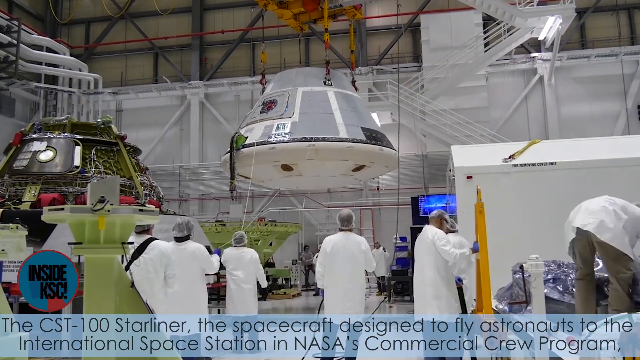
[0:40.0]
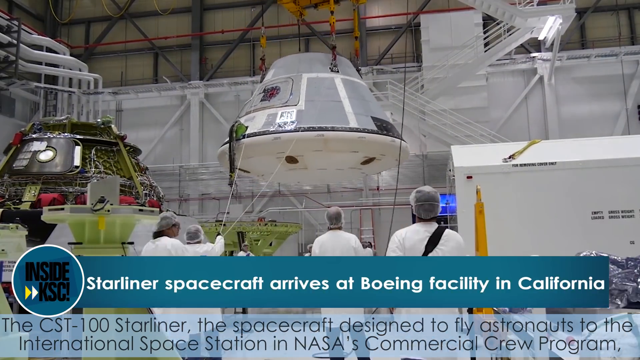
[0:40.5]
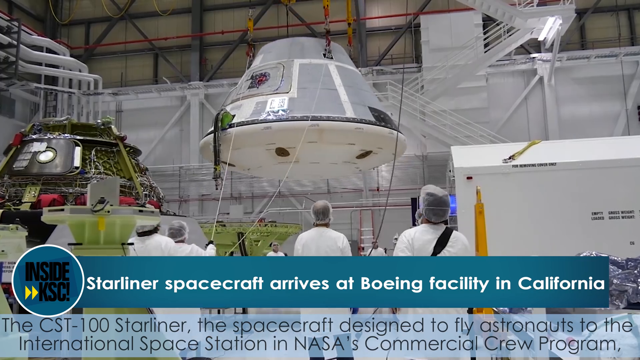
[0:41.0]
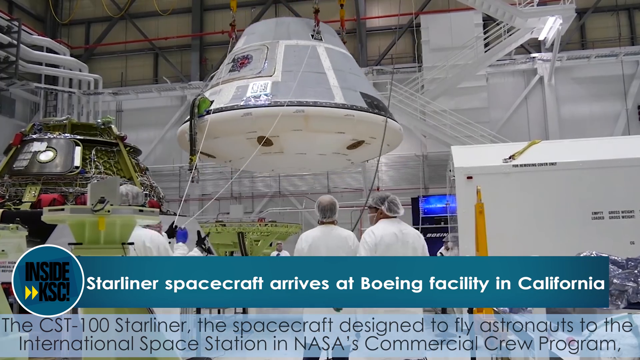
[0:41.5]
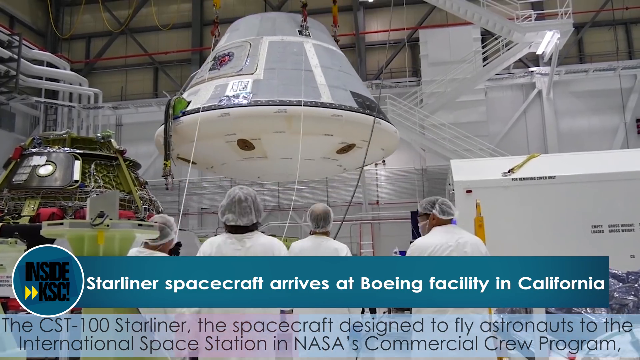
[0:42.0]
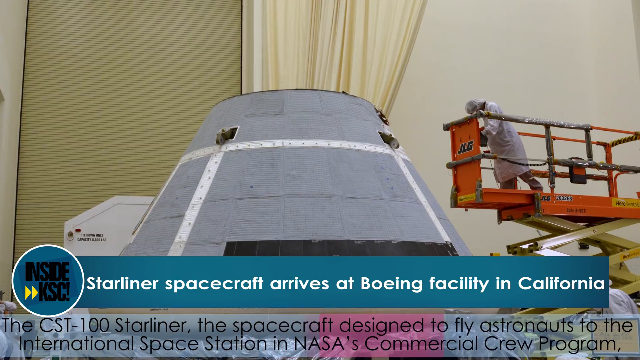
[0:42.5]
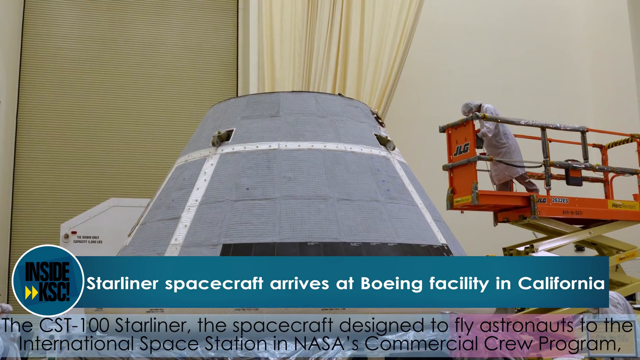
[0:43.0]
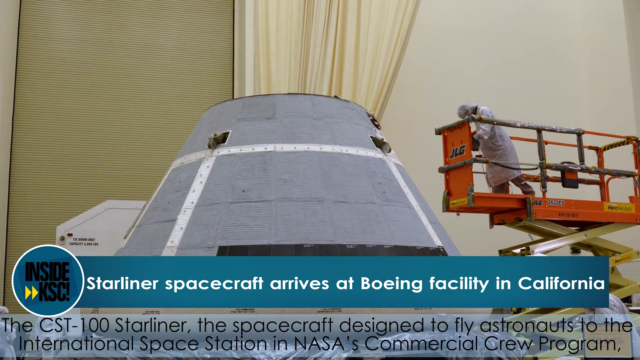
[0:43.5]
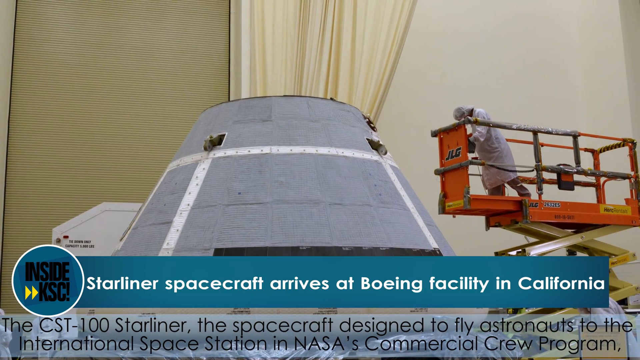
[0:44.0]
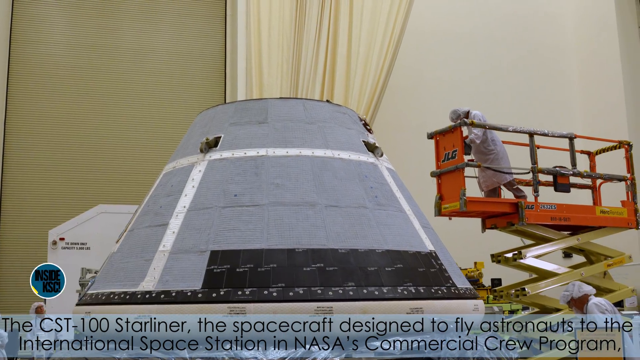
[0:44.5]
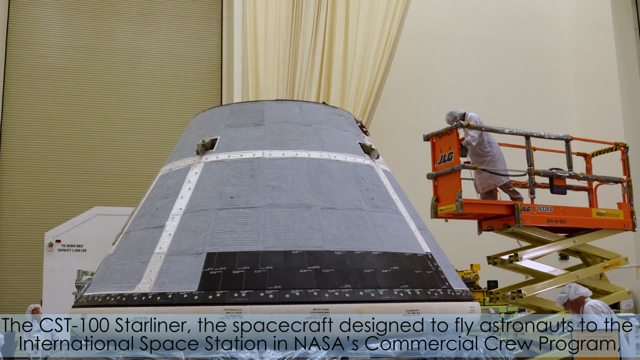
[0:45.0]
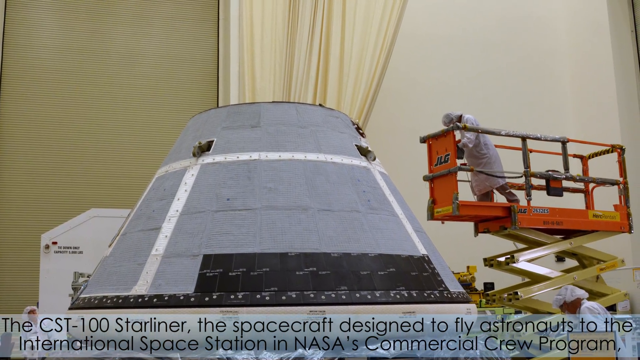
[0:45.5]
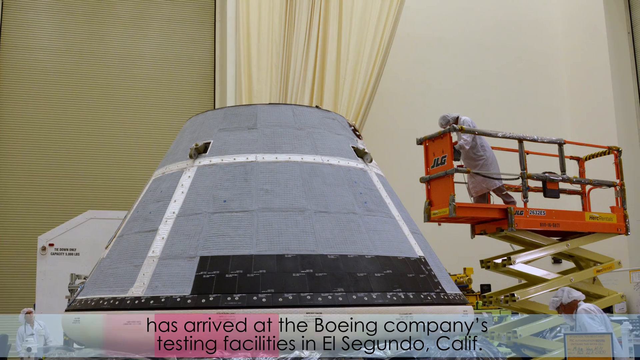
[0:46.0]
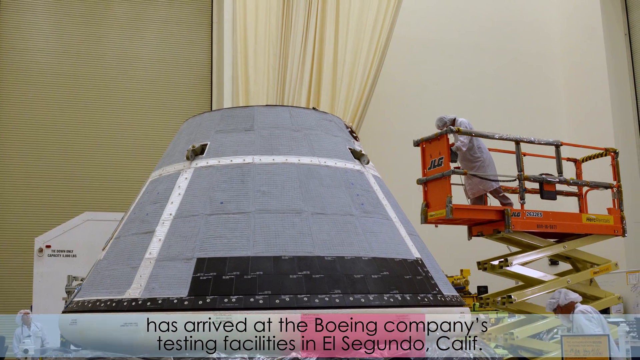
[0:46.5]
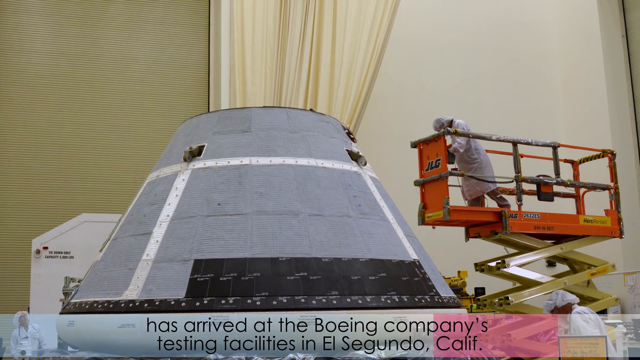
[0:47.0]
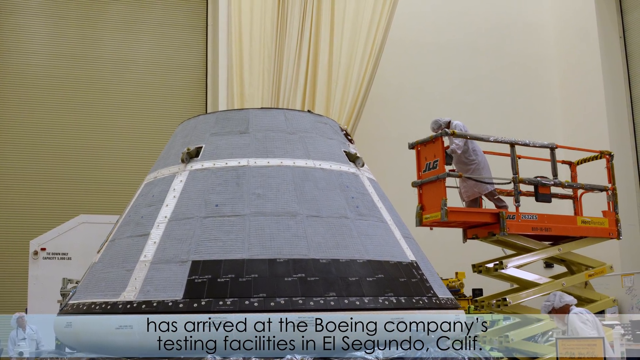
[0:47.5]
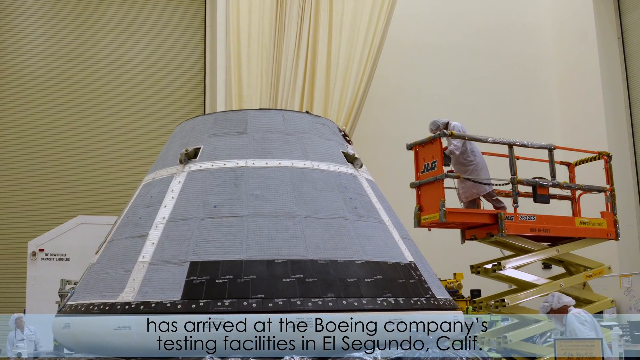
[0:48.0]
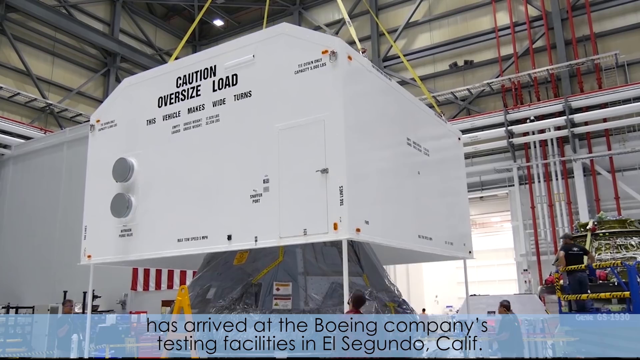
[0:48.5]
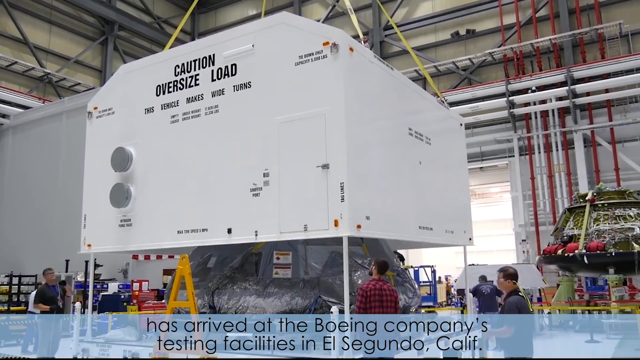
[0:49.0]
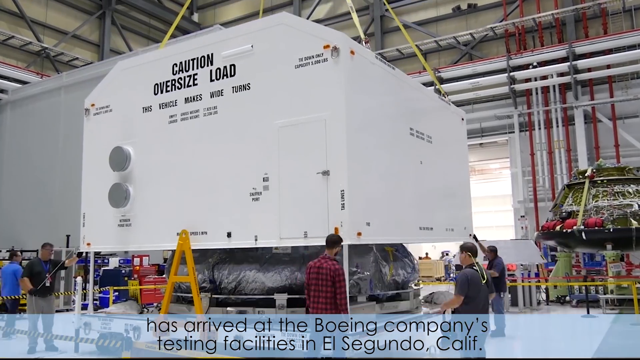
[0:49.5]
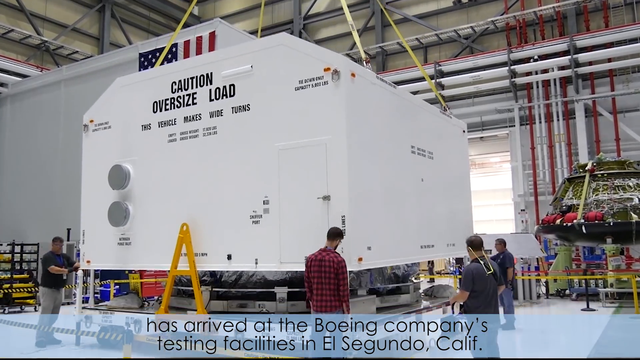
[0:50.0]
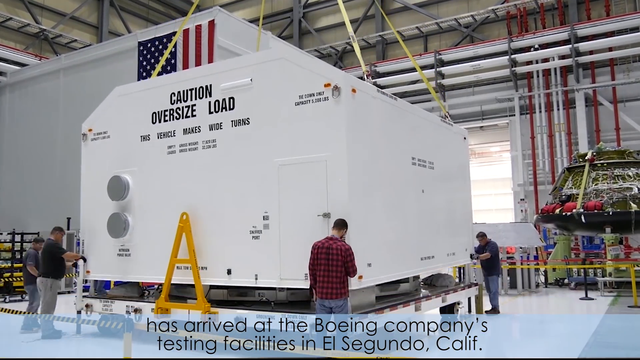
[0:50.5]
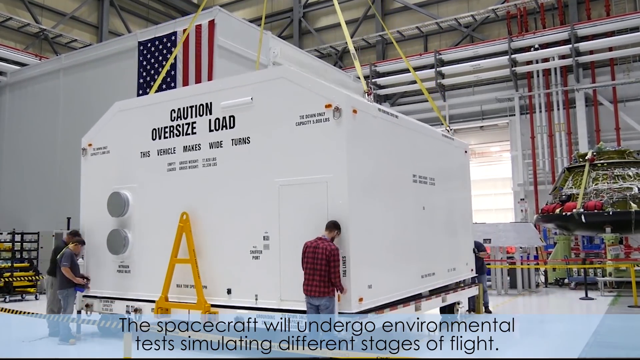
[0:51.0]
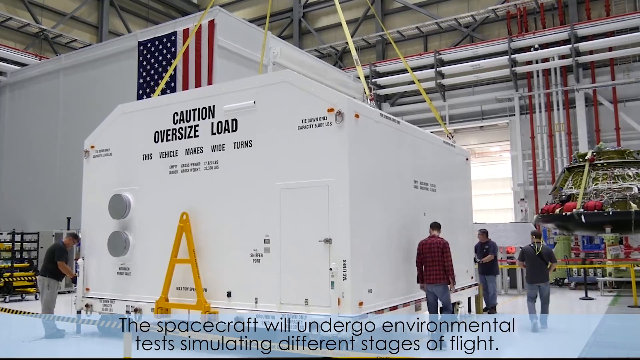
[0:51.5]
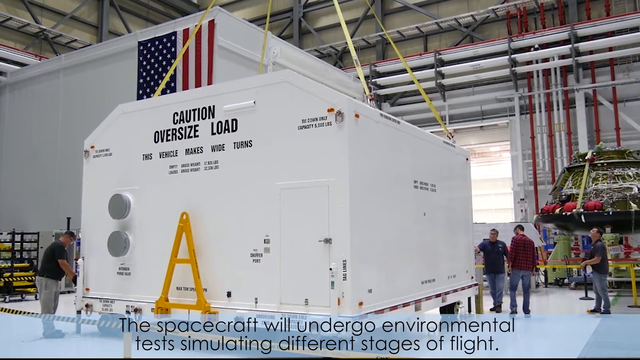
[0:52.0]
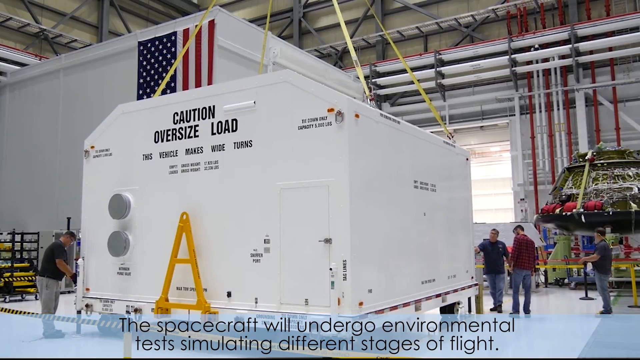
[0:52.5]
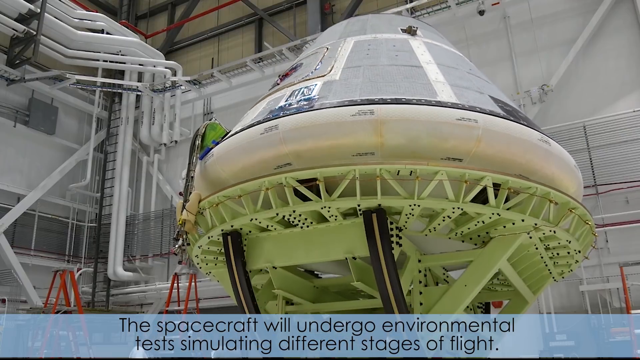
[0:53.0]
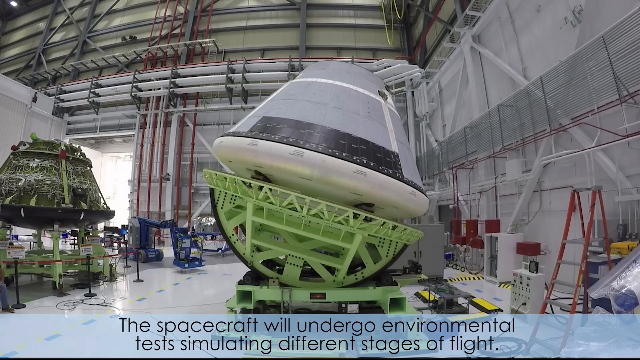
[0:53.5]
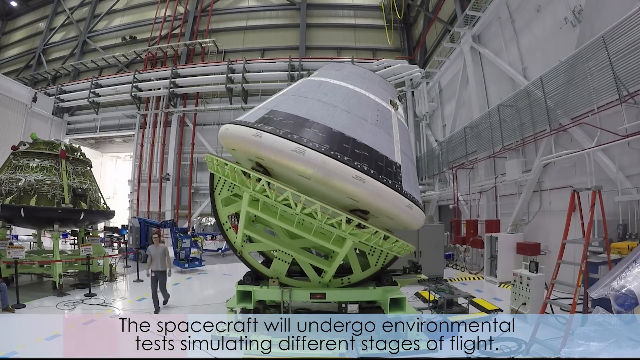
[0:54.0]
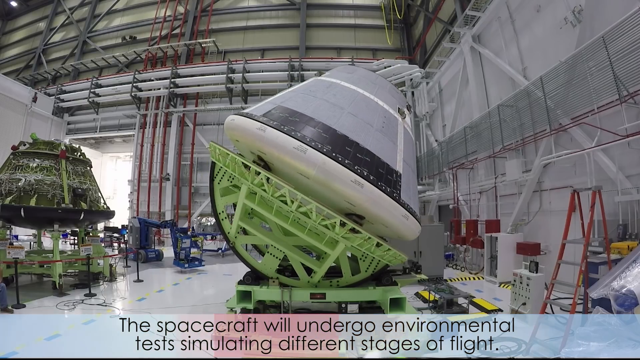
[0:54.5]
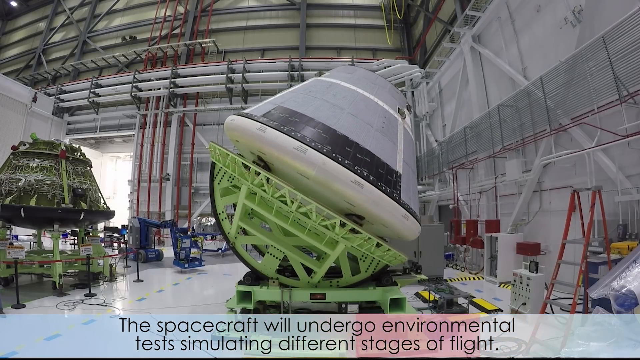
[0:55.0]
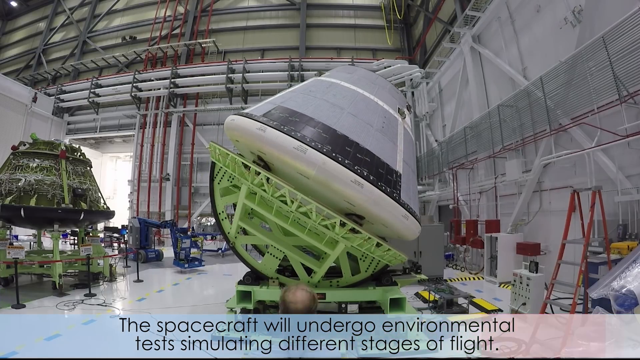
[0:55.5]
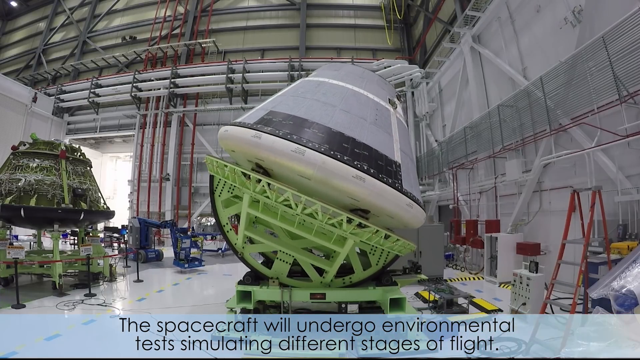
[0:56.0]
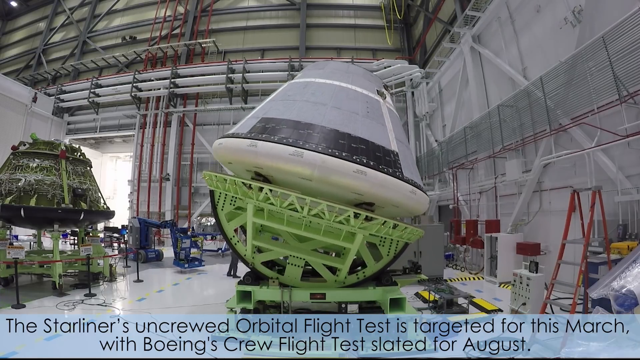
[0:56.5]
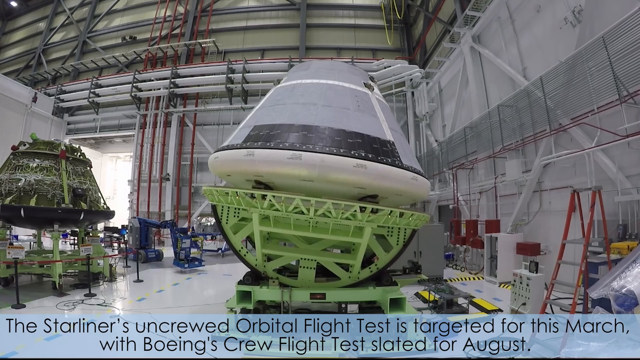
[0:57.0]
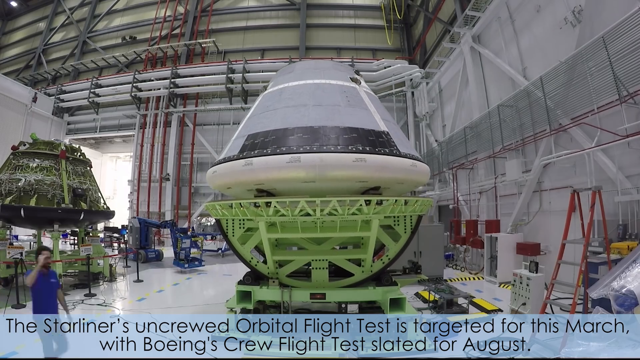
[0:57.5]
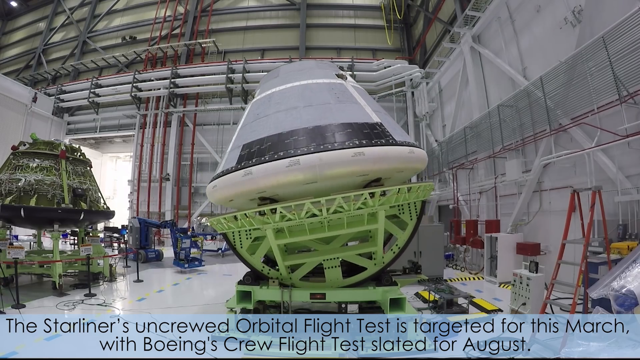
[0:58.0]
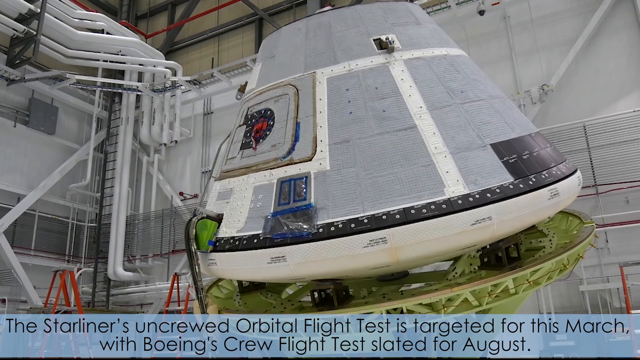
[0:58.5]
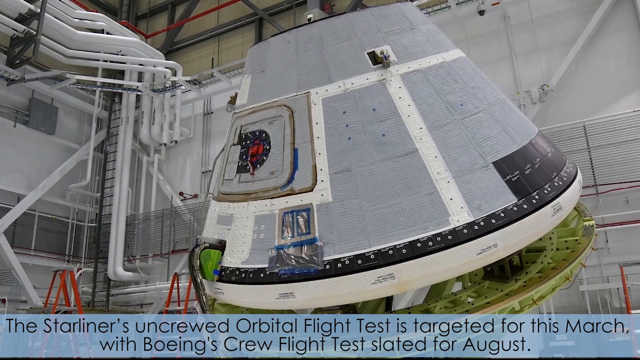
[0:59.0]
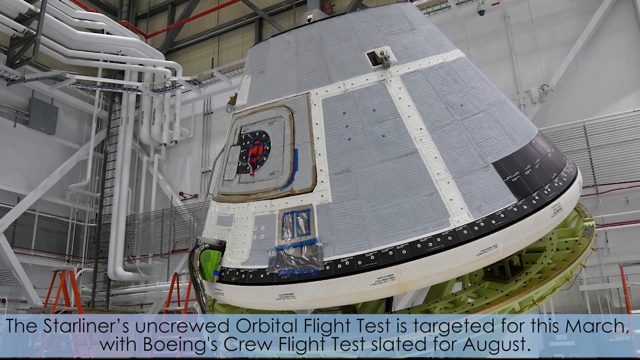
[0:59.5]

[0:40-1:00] A number of men in white lab coats and blue gloves are shown. A gray box at the bottom says "the CST-100 Starliner, a spacecraft designed to fly astronauts to the International Space Station and NASA's Commercial Crew Program." The back wall is gray. A yellow pulley system carries the gray rounded capsule from up top, and everyone moves very quickly because the video is sped up. A teal box with white lining appears in the center, reading "Starliner spacecraft arrives at Boeing facility in California." To the right is a white circle on a teal background with black lettering saying "inside KSC" and two yellow arrows pointing at the K. Black and white cords pull the gray capsule. The capsule rests downwards while somebody is on a yellow lift with an orange bucket to the right side, and a person in a white lab coat is on the right. The capsule is gray with white rounded stripes on a black rim. Below, on an off-white background, black lettering says "has arrived at the Boeing Company's testing facilities in El Segundo, California." There is a yellow wall behind the capsule. A large white box is over the capsule, with a number of men on the outer edges; black lettering on the left side of the box reads "Caution oversized load" and underneath "This vehicle makes wide turns." They lower the box over the capsule.